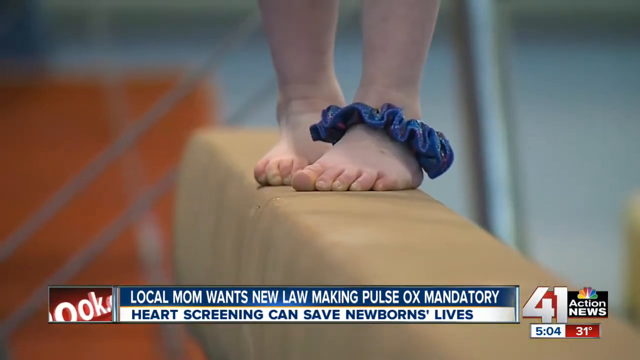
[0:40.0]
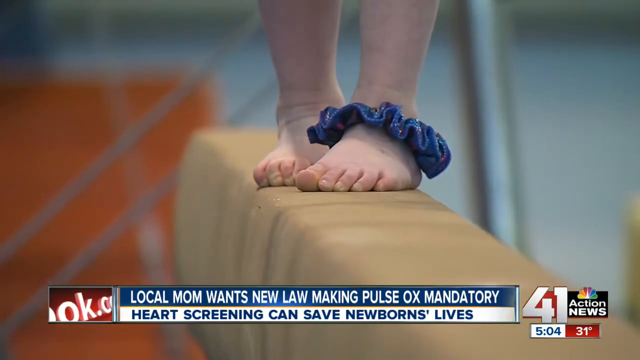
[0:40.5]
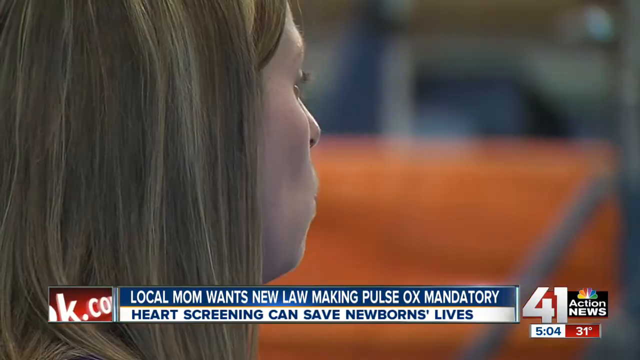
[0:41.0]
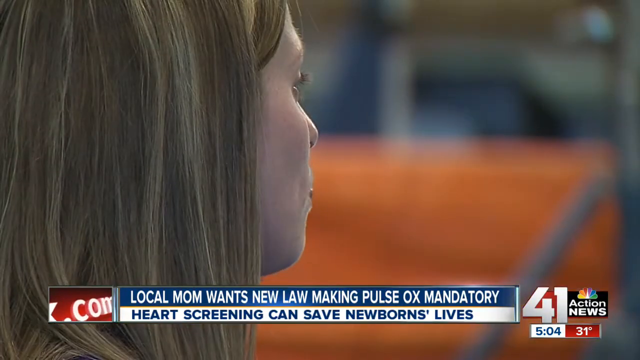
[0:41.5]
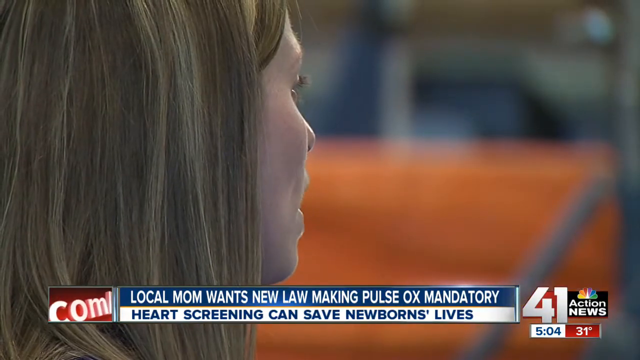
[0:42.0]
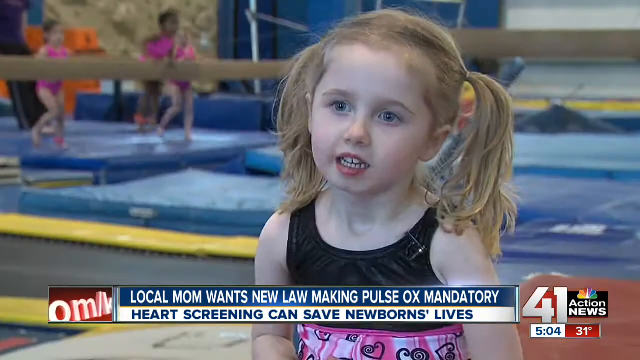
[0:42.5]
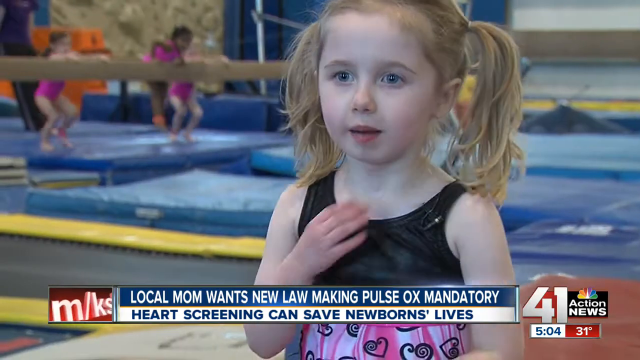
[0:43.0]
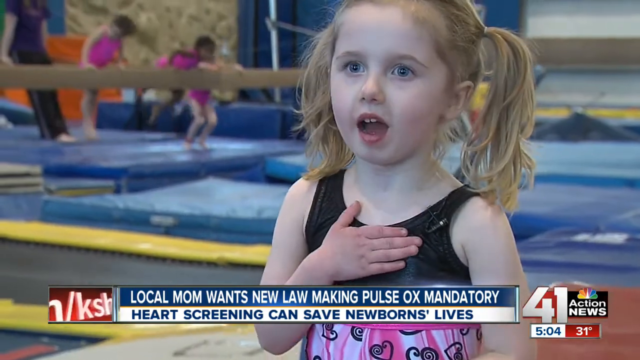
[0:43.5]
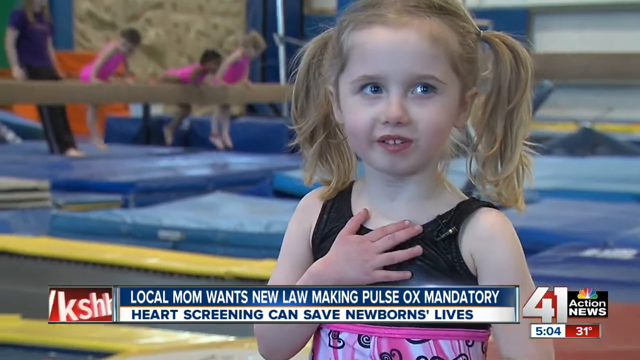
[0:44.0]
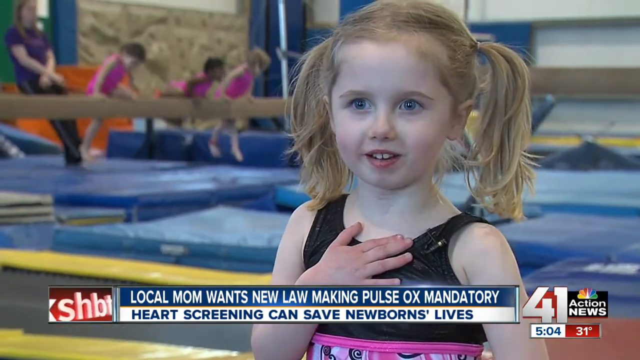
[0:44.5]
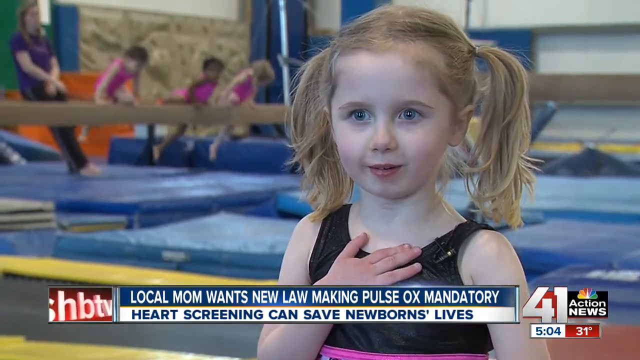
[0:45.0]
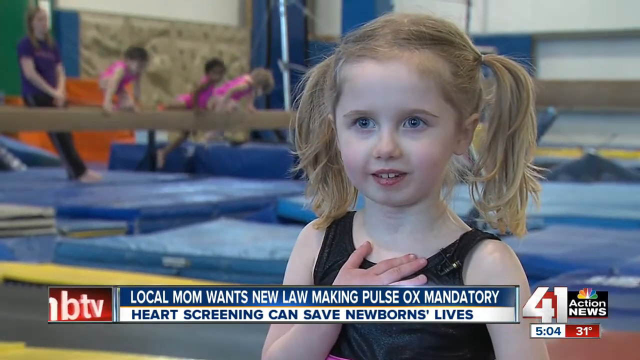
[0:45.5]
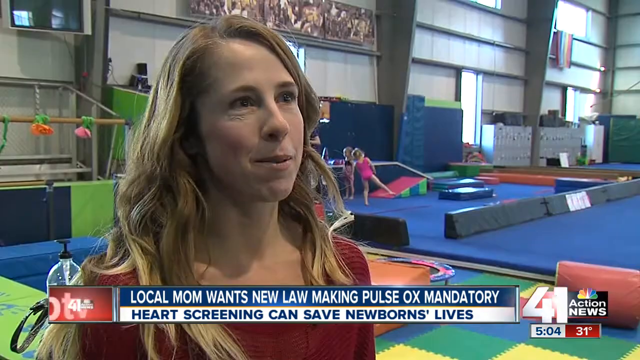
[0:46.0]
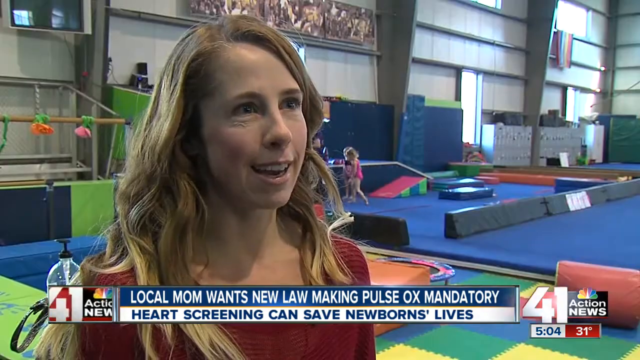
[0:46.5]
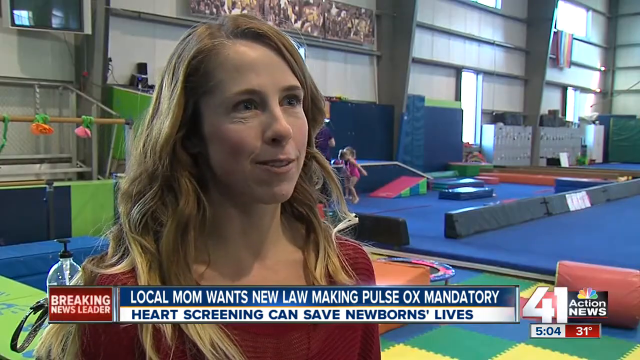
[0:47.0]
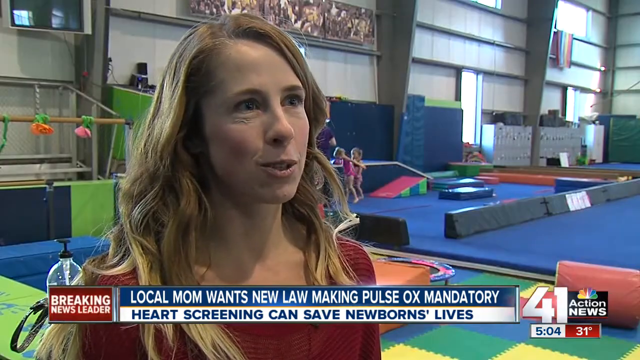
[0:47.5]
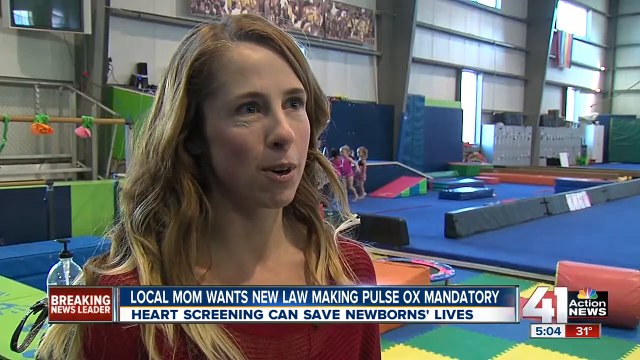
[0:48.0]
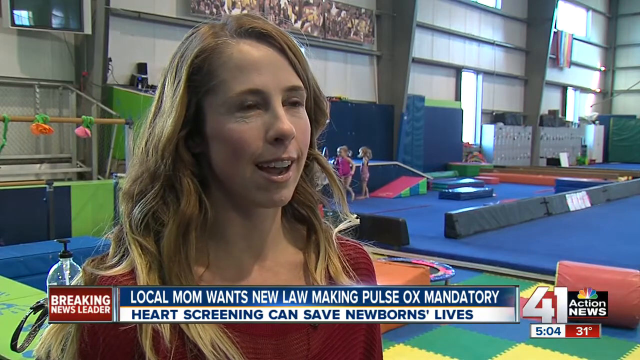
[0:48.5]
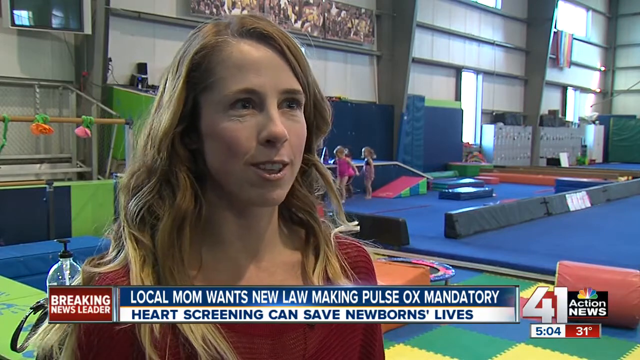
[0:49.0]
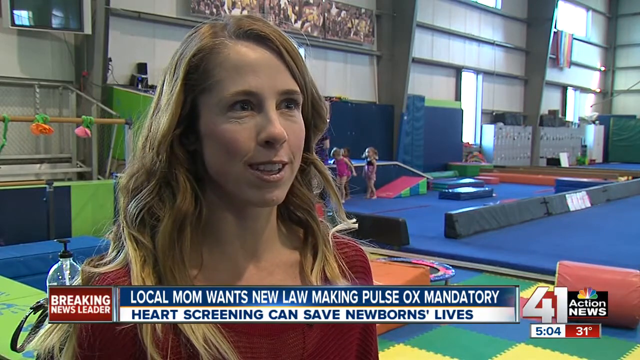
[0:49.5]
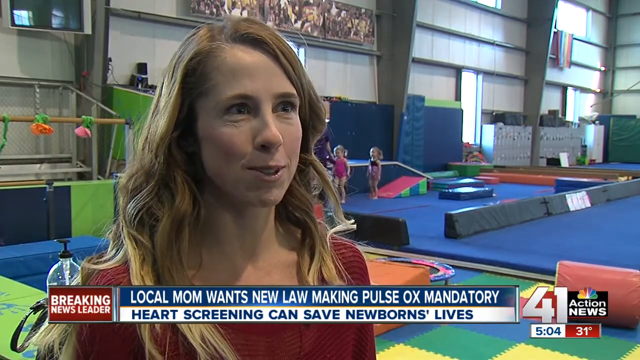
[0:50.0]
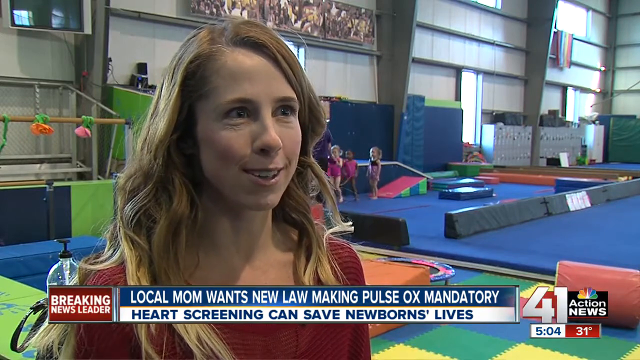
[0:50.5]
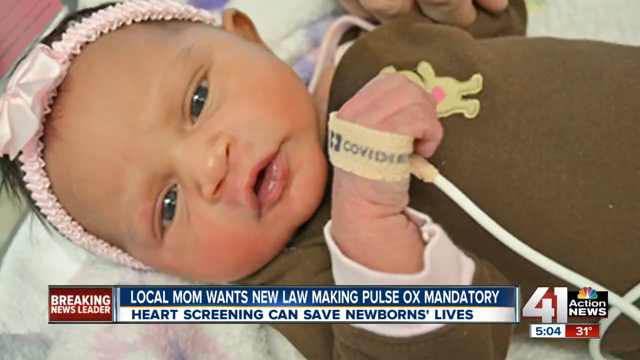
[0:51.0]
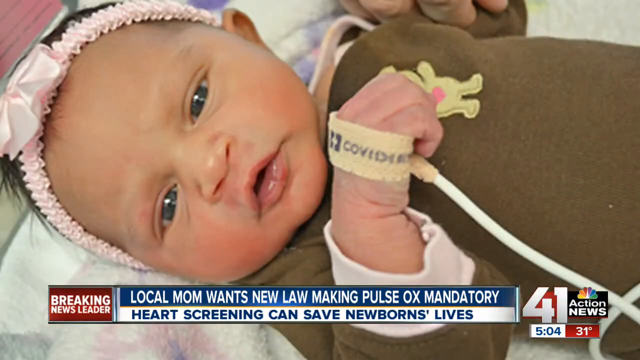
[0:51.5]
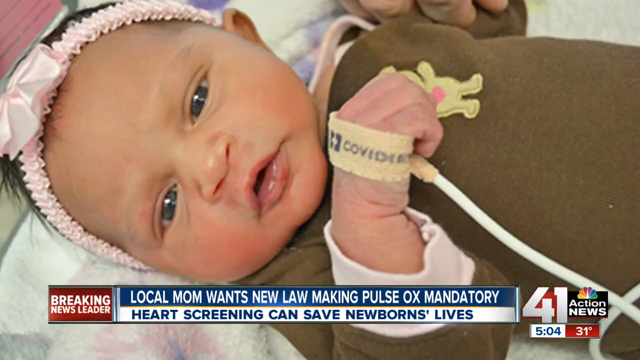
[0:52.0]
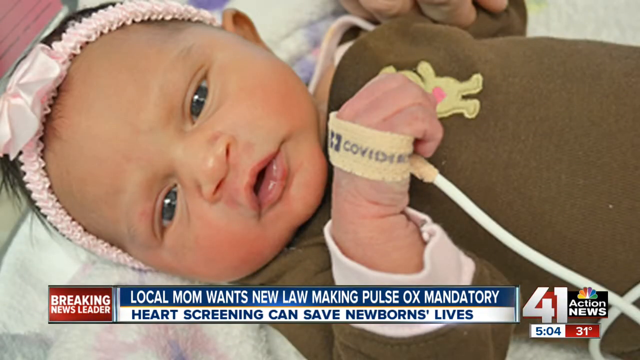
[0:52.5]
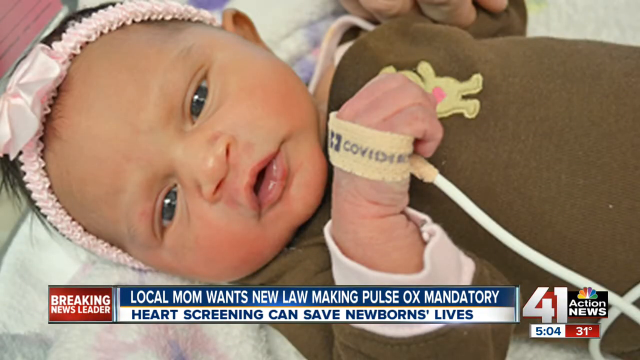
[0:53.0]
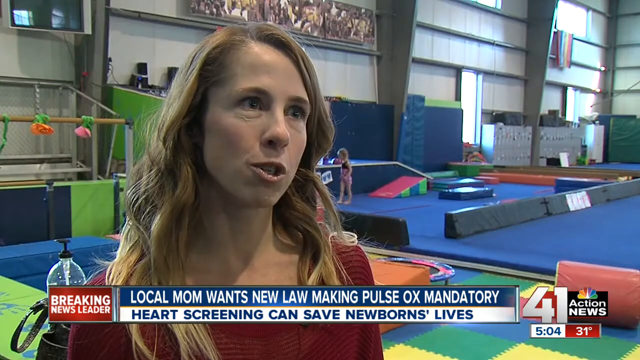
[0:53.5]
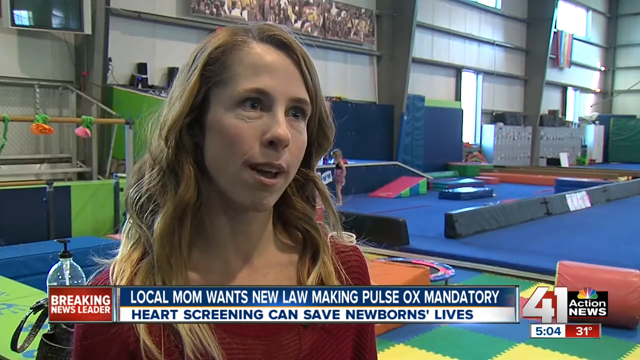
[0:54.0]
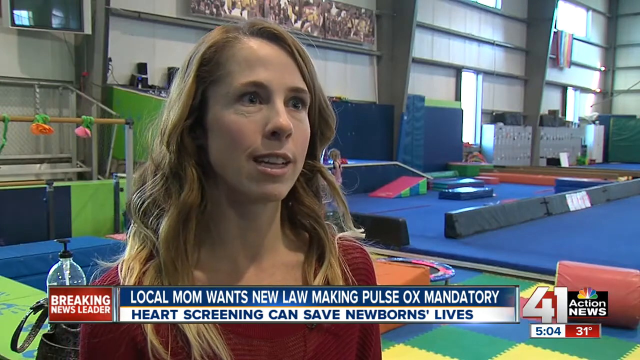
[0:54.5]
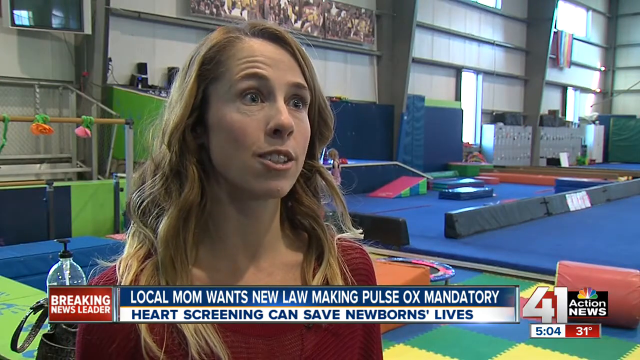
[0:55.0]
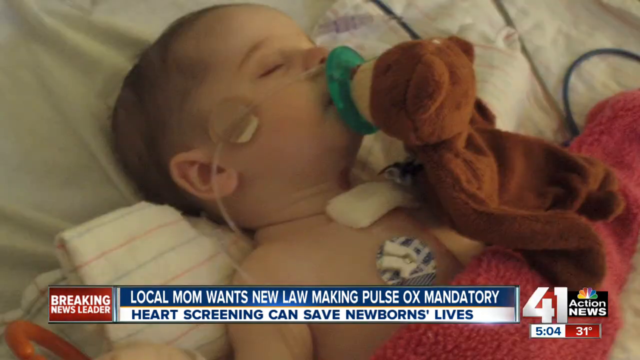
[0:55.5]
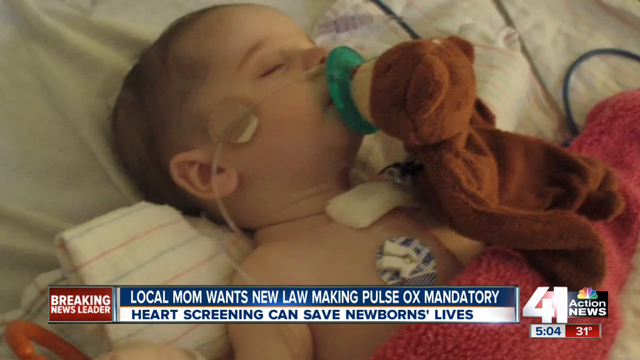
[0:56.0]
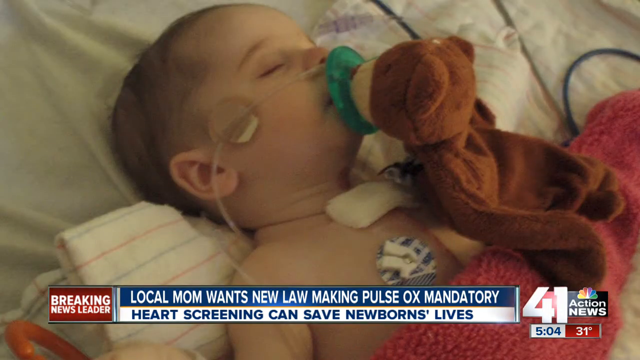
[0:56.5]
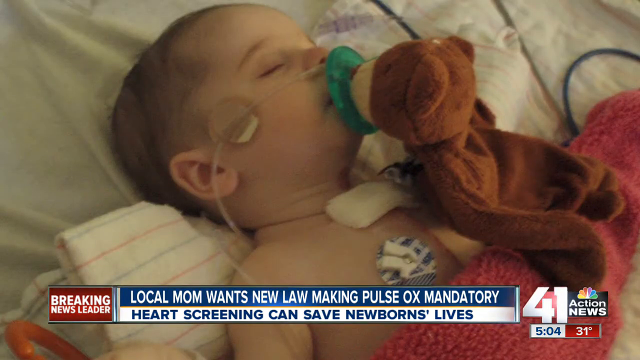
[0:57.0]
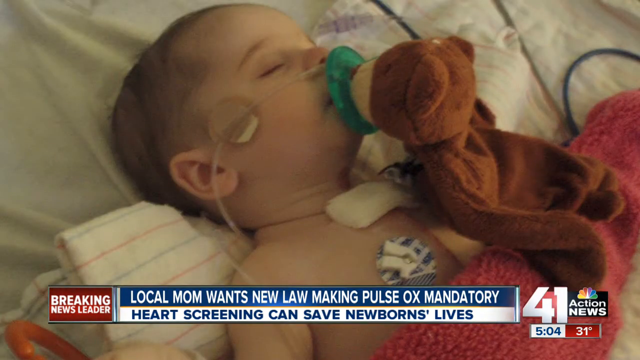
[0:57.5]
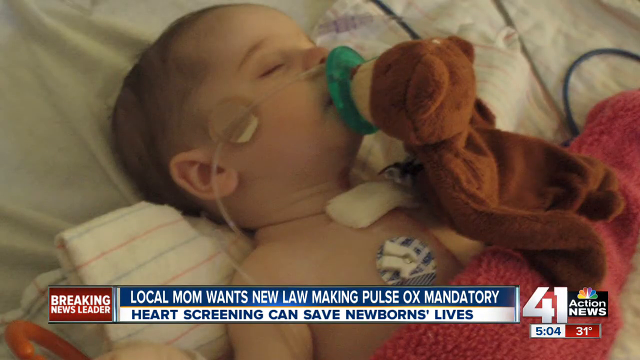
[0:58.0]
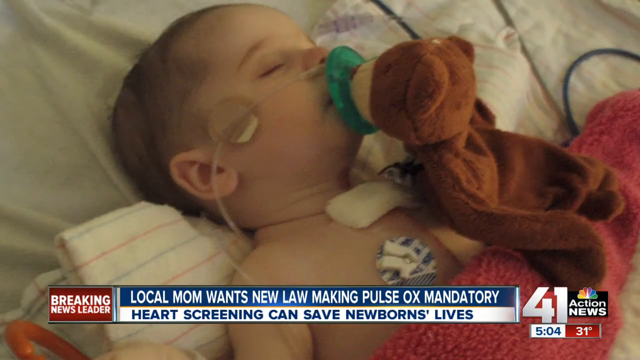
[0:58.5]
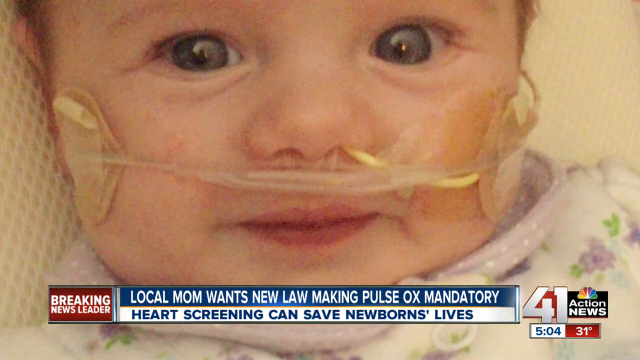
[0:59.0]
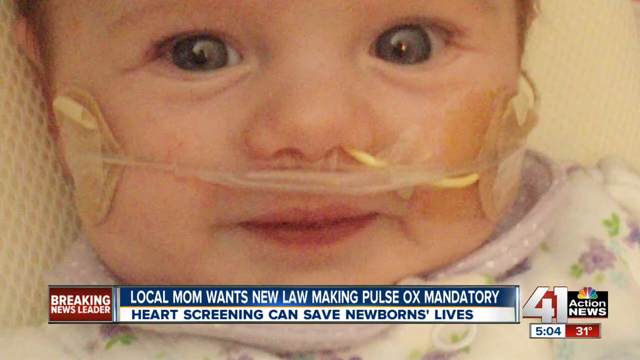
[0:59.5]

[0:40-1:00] The young girl with the blue scrunchie on her left leg has ponytails and blue eyes and looks to be about six years old; in the background, three young girls are playing. The scene returns to the blondish-haired woman in red, who is talking. Then a small baby with a tag on her right hand appears. Another baby has medical instruments connected to her and a brown teddy on top of her as she sleeps. Another baby, who looks like a newborn, has pipes connected to her nostrils.